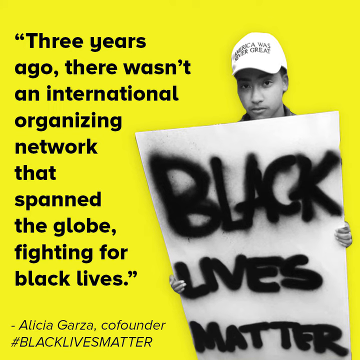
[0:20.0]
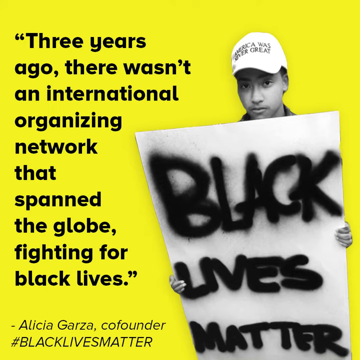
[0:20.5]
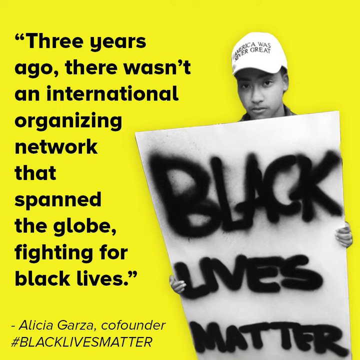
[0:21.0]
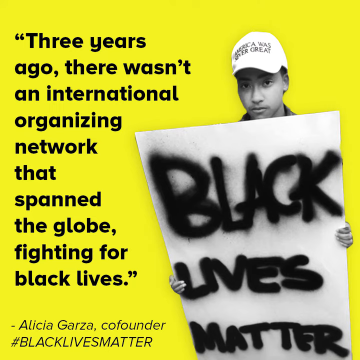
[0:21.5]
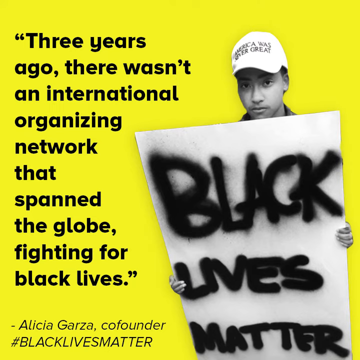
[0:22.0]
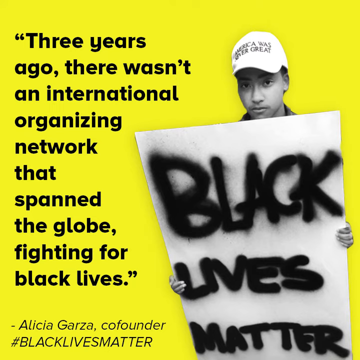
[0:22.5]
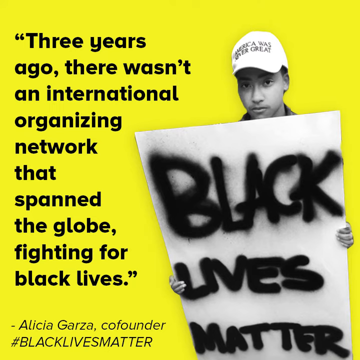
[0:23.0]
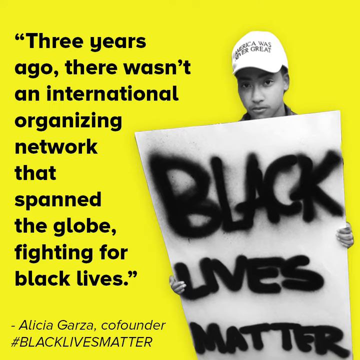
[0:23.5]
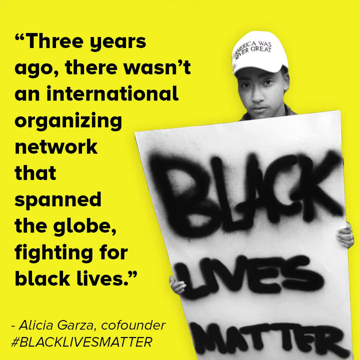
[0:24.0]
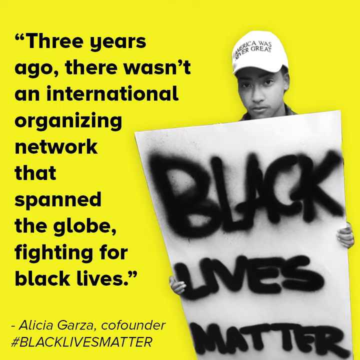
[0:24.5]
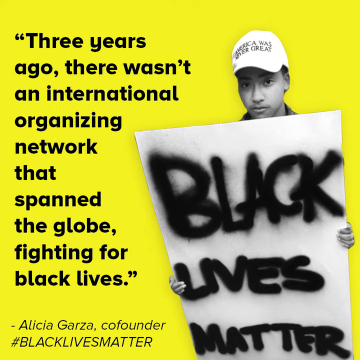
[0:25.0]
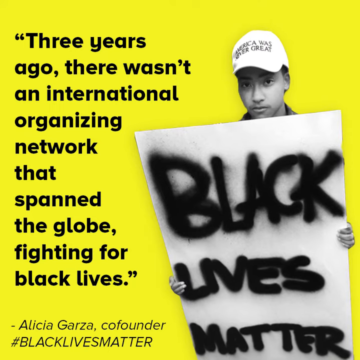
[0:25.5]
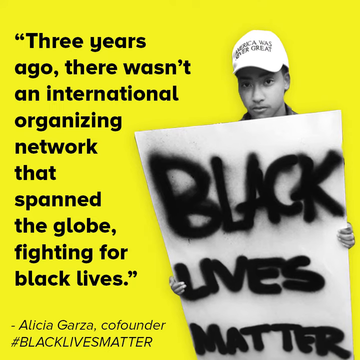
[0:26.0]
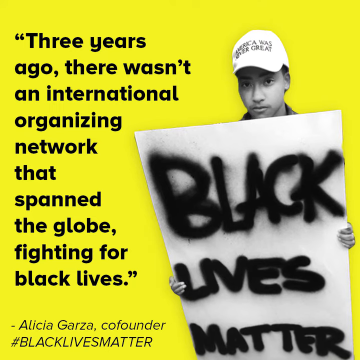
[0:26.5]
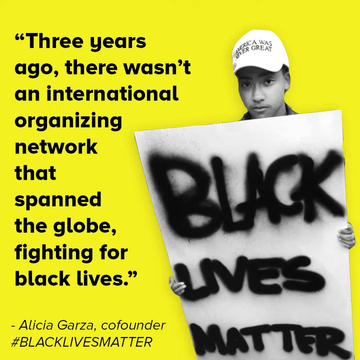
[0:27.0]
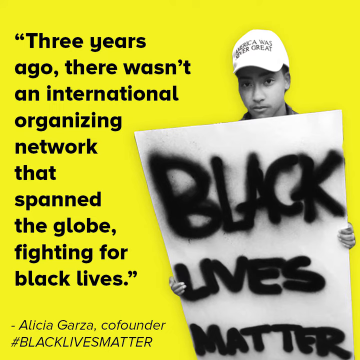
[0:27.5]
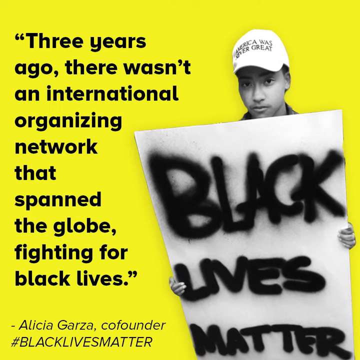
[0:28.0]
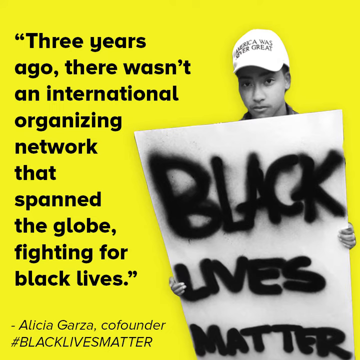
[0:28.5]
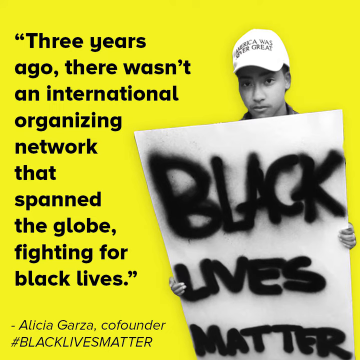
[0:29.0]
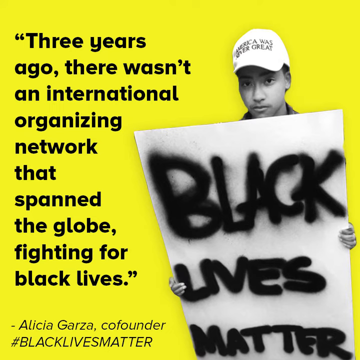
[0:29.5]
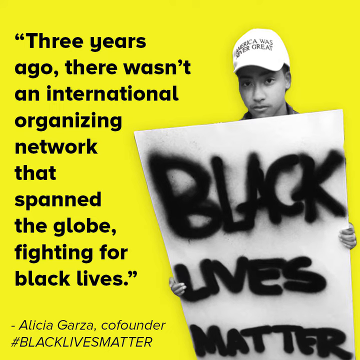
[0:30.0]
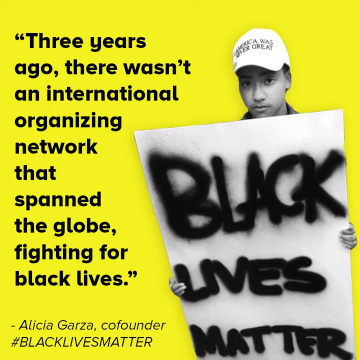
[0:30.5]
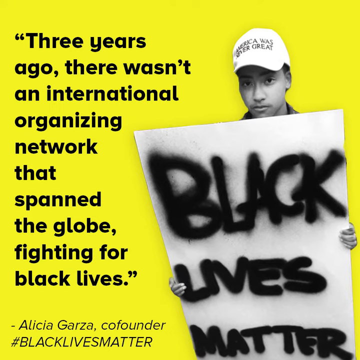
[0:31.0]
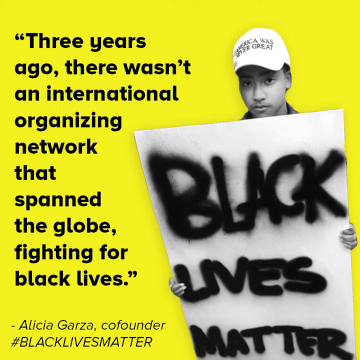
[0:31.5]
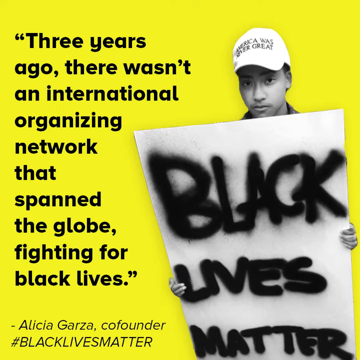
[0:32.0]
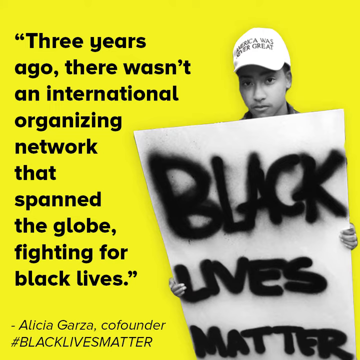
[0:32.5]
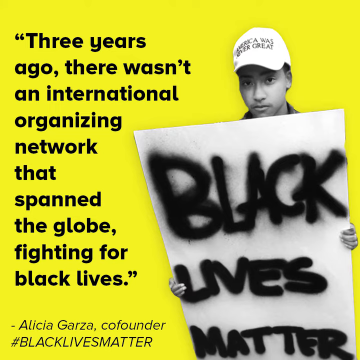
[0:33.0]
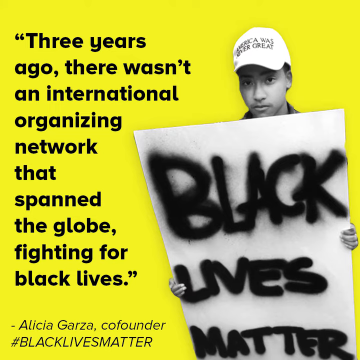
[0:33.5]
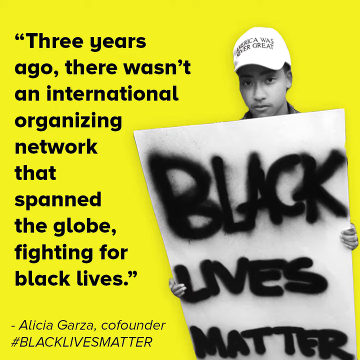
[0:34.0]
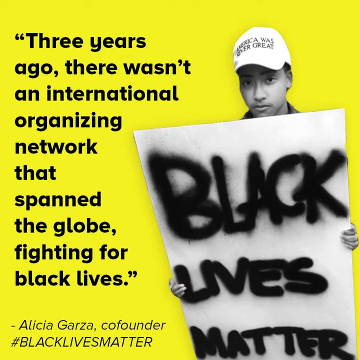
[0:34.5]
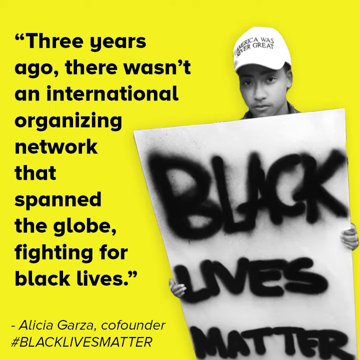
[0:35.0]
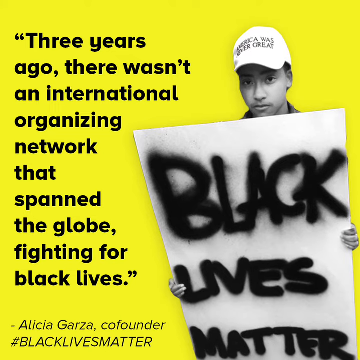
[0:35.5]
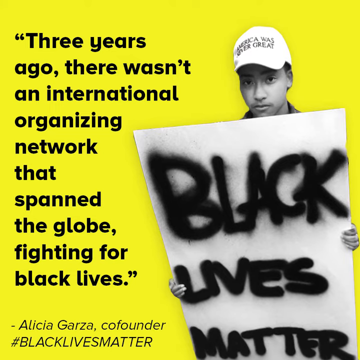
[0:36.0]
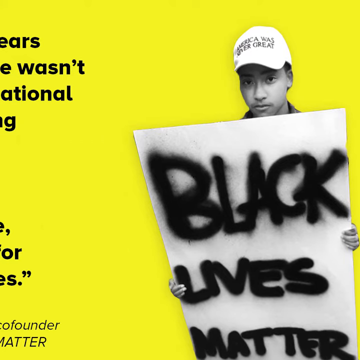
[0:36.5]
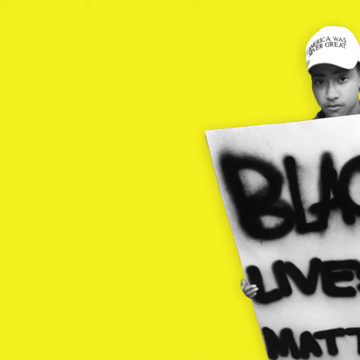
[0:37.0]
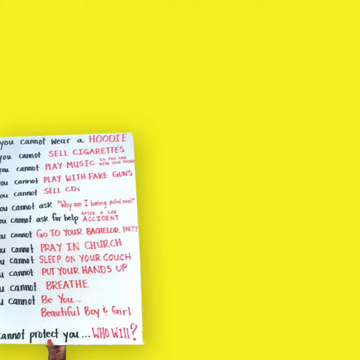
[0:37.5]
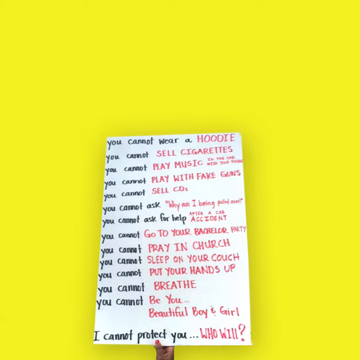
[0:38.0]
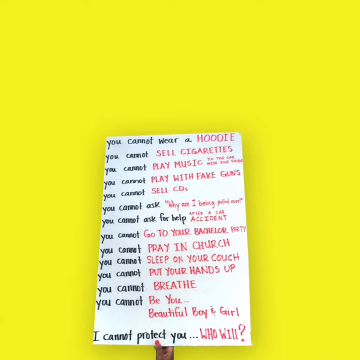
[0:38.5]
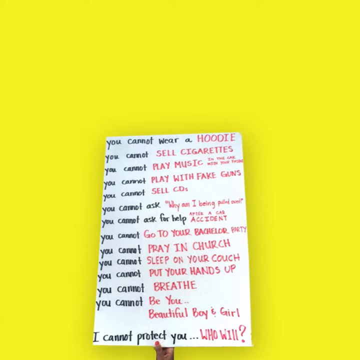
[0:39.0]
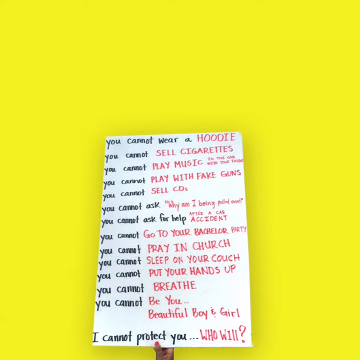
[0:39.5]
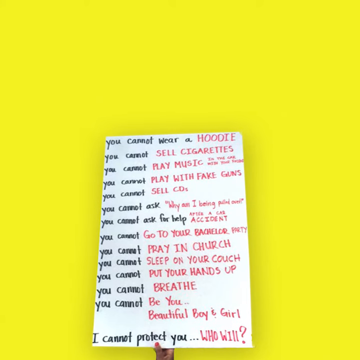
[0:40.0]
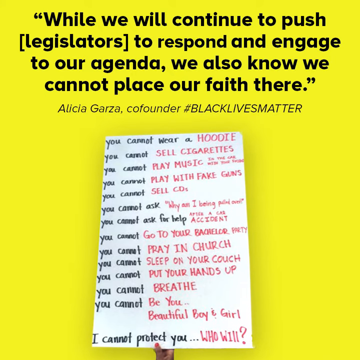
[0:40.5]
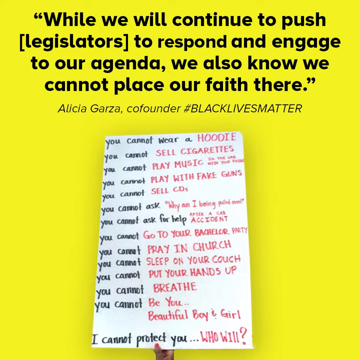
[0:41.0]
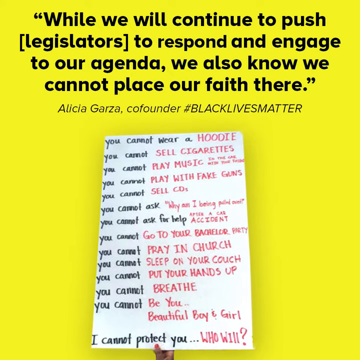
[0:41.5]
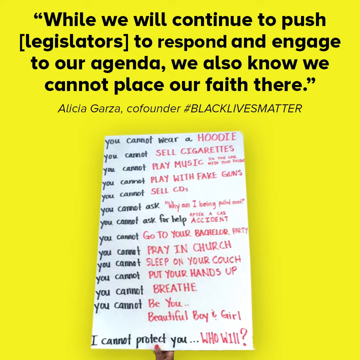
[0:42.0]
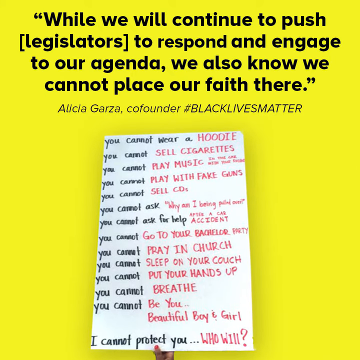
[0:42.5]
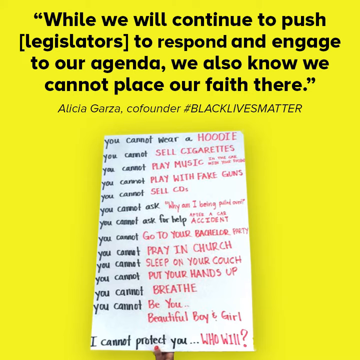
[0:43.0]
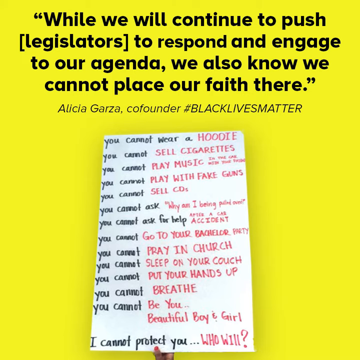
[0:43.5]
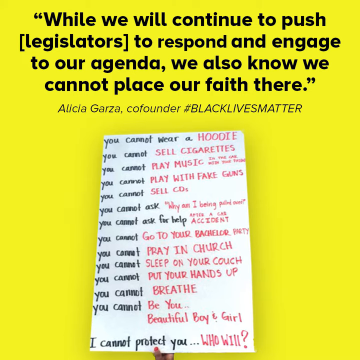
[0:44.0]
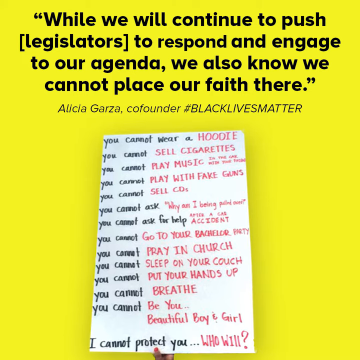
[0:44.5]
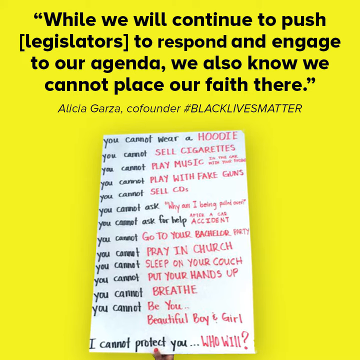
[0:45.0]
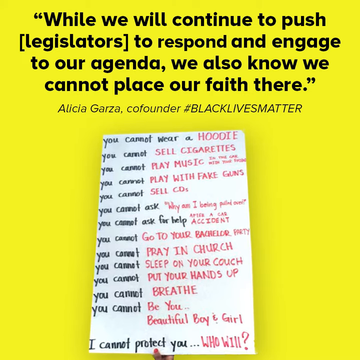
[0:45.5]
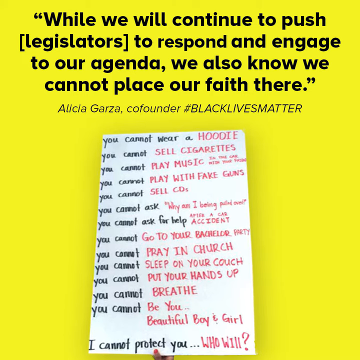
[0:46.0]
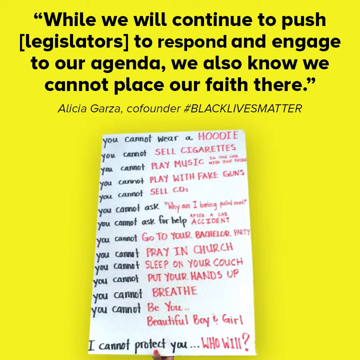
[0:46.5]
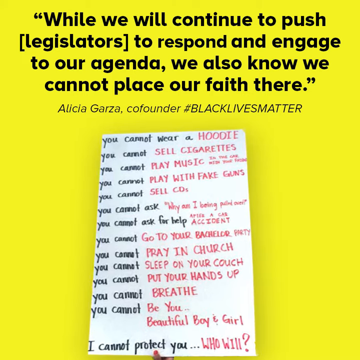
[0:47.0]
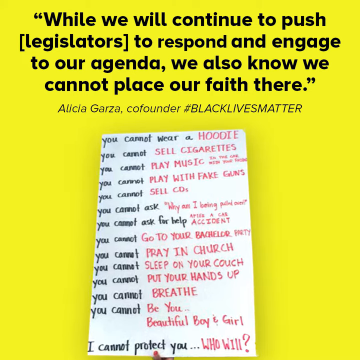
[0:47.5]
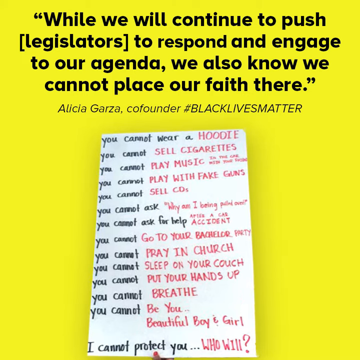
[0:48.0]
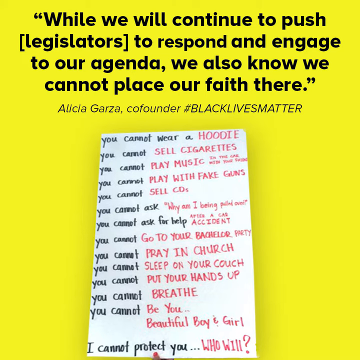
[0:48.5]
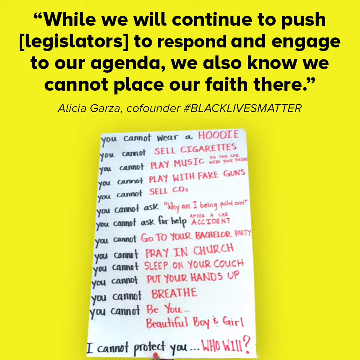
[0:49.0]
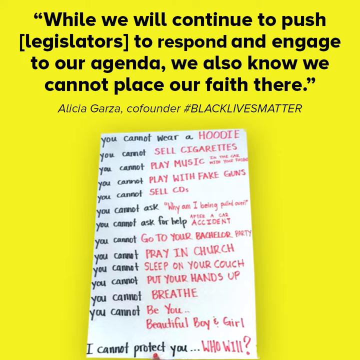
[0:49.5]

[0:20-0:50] The left half of the screen has a yellow background with black text reading: "three years ago there wasn't an international organizing network that spanned the globe fighting for black lives." It is a quote from Alicia Garza, co-founder of Black Lives Matter. On the right side of the screen is an inlaid picture of a man wearing a hat that says "America was never great," holding a sign that says "Black Lives Matter." This graphic is replaced by another picket sign from a protest listing things you cannot do, such as wear hoodies, sell cigarettes, play with fake guns, and sell CDs. At the top of the graphic, black lettering reads: "while we continue to push legislators to respond and engage to our agenda, we also know we cannot place our faith there," another quote from Alicia Garza, co-founder of Black Lives Matter. The view then moves to a close-up of the protest sign, which also says "you cannot pray in church, you cannot put your hands up, you cannot breathe, you cannot be you, beautiful boy and girl, I cannot protect you, who will?"